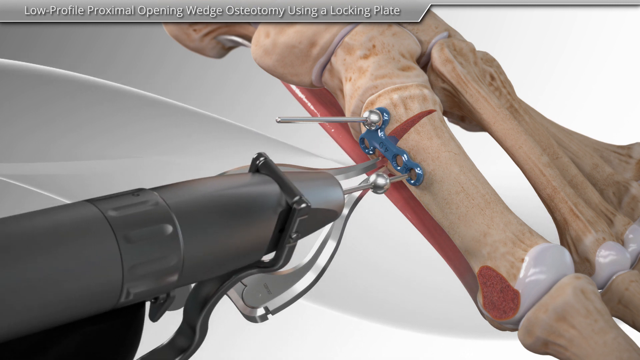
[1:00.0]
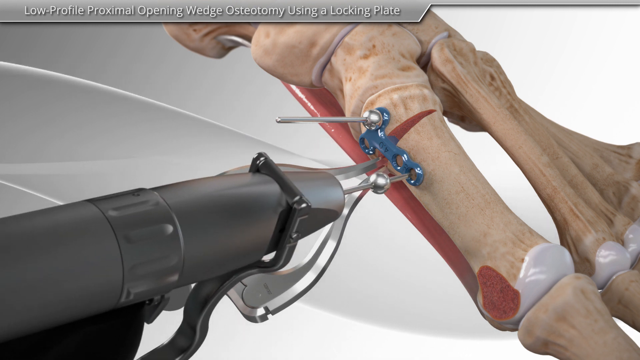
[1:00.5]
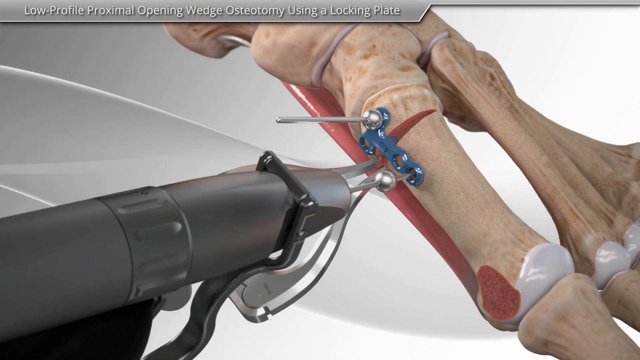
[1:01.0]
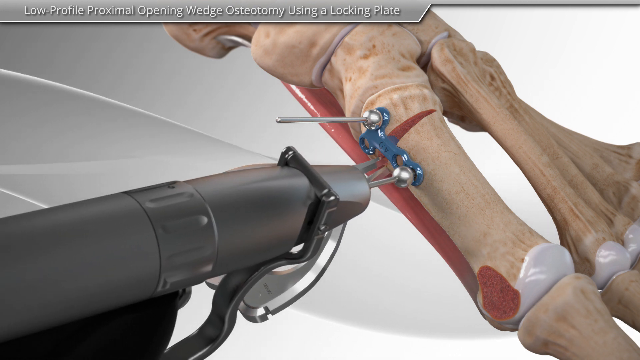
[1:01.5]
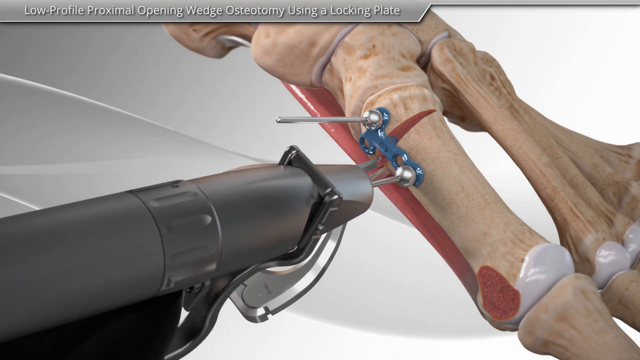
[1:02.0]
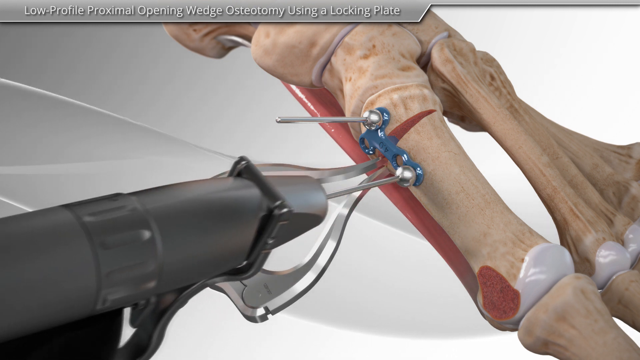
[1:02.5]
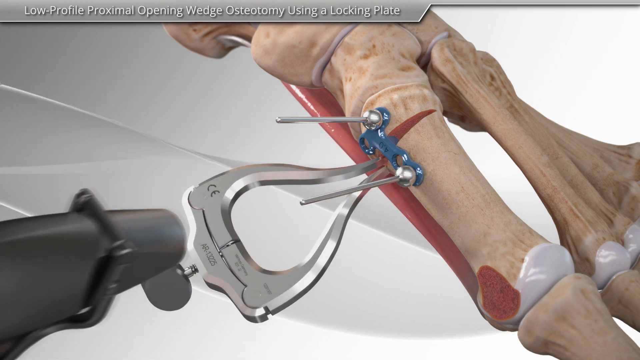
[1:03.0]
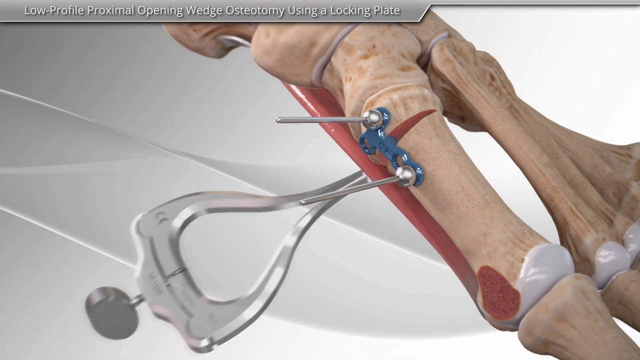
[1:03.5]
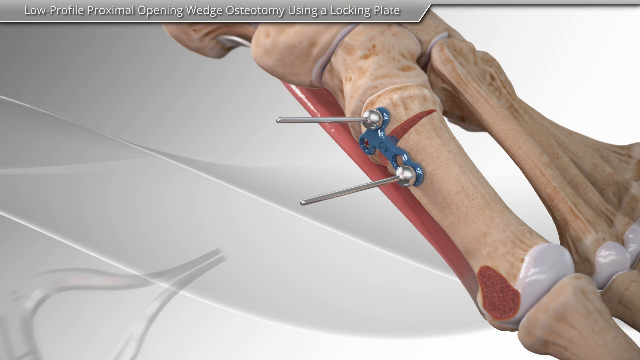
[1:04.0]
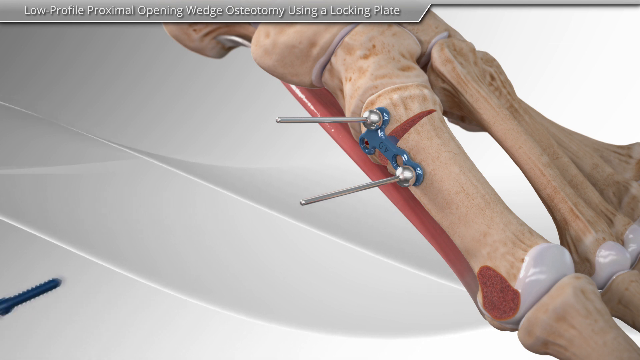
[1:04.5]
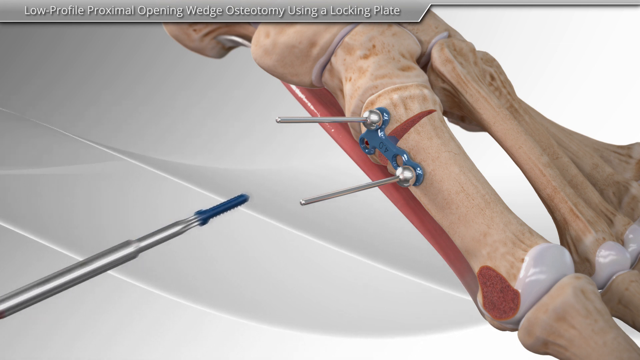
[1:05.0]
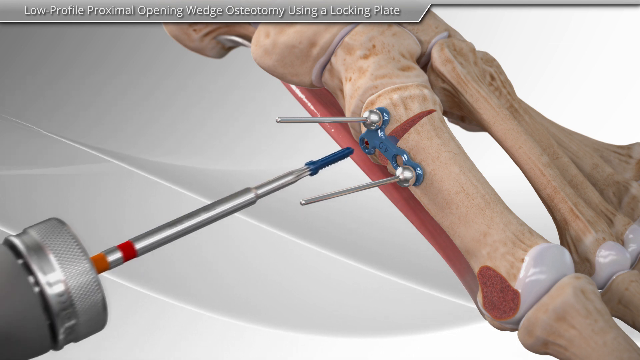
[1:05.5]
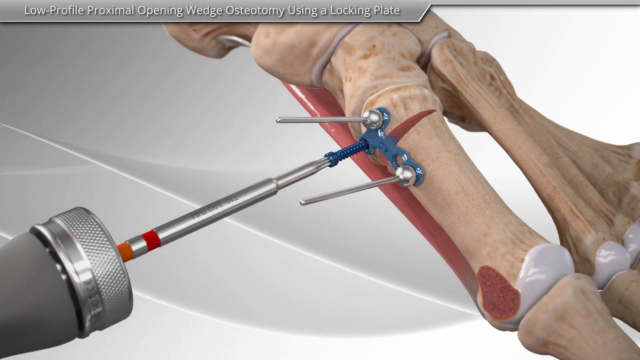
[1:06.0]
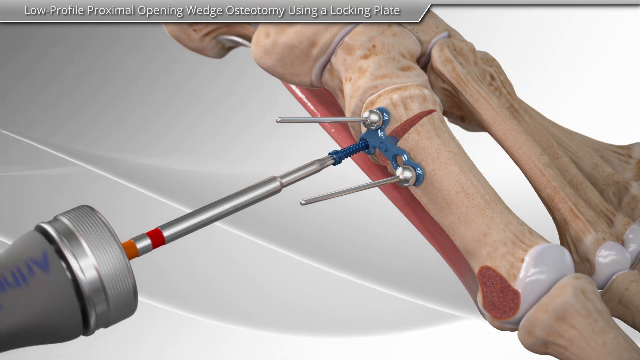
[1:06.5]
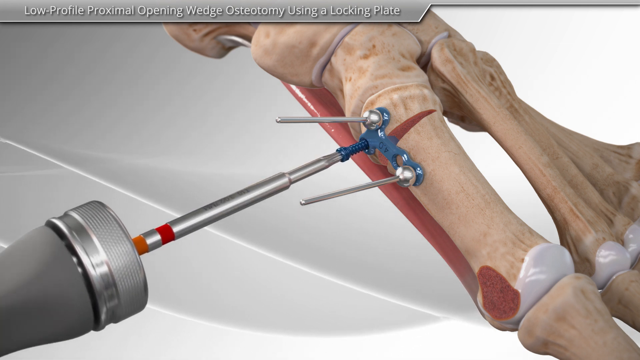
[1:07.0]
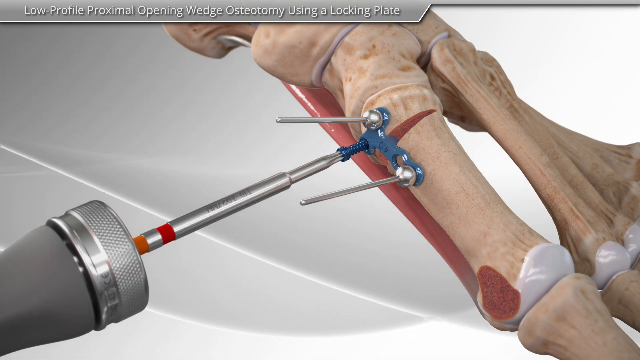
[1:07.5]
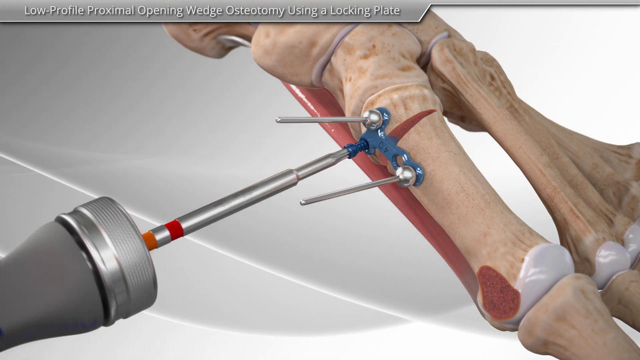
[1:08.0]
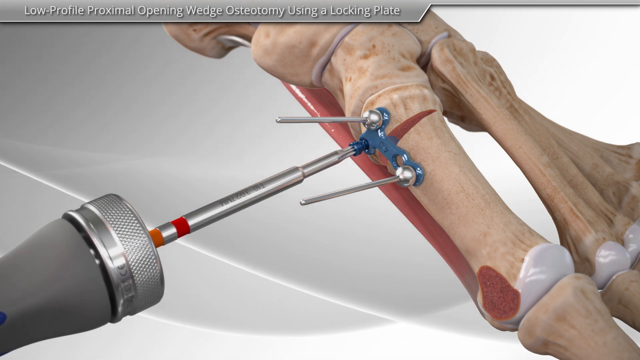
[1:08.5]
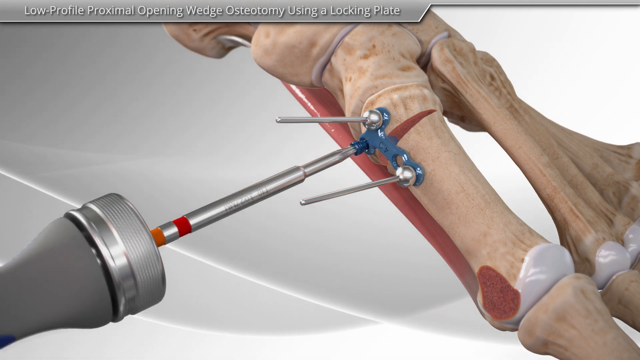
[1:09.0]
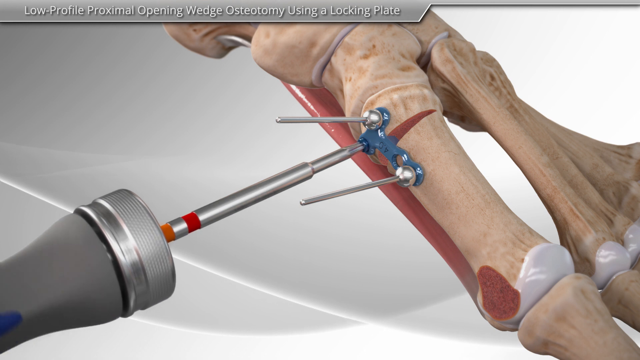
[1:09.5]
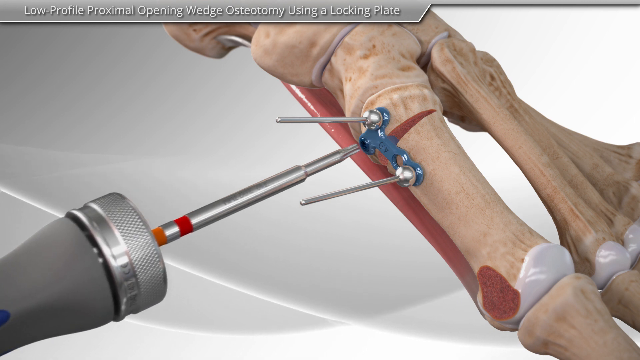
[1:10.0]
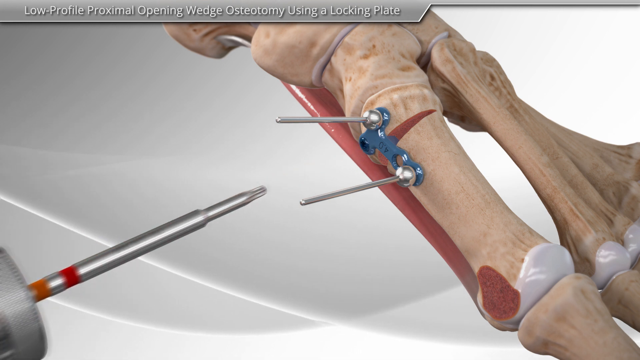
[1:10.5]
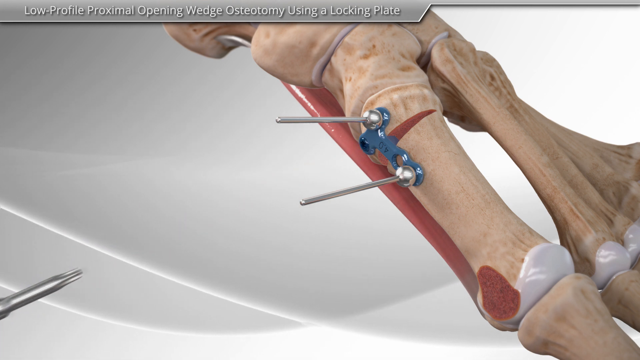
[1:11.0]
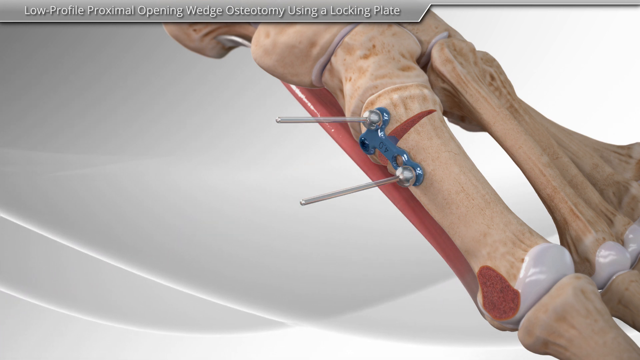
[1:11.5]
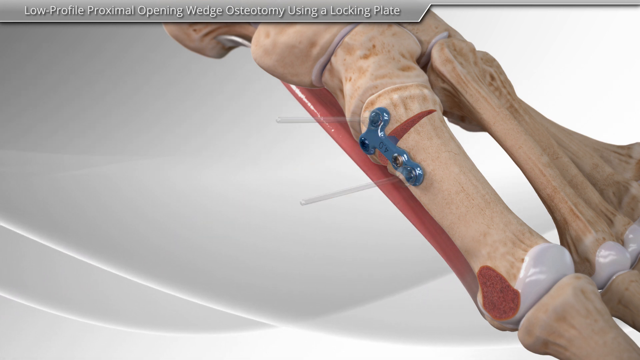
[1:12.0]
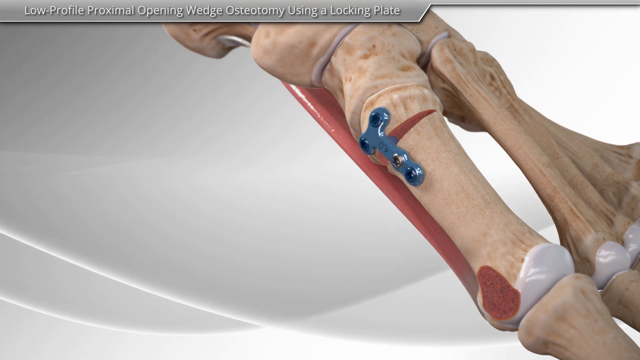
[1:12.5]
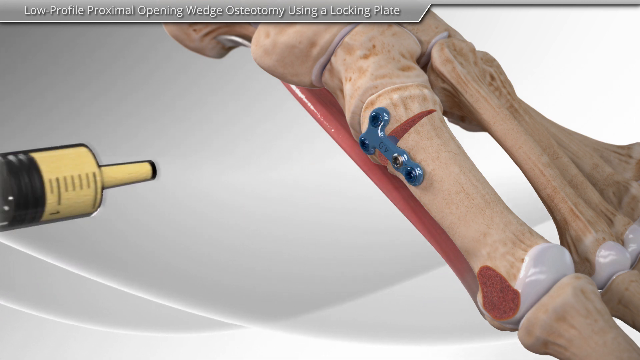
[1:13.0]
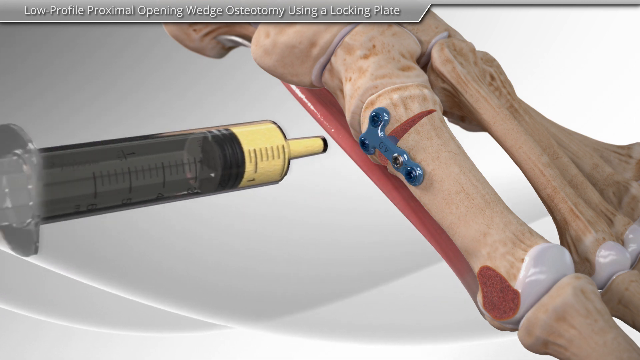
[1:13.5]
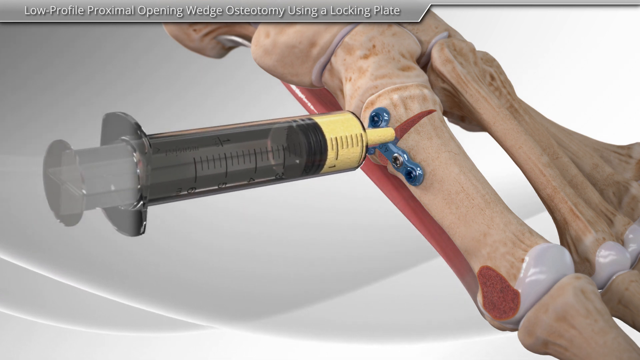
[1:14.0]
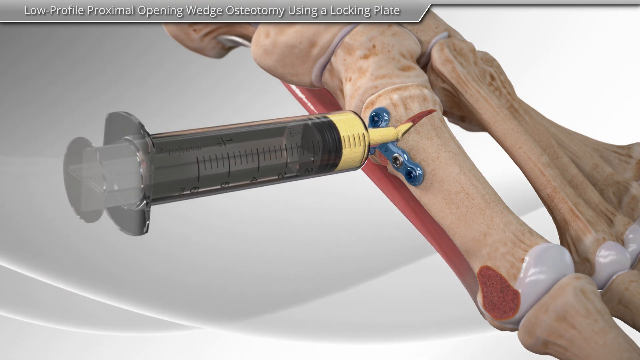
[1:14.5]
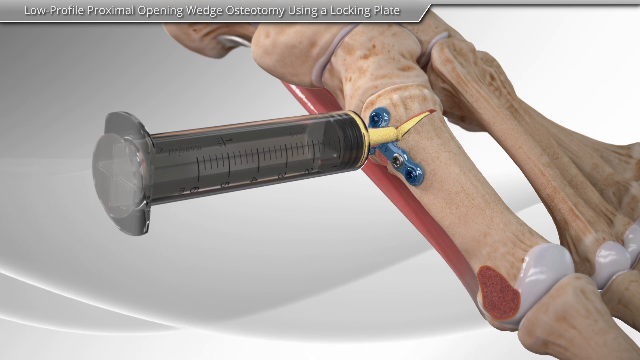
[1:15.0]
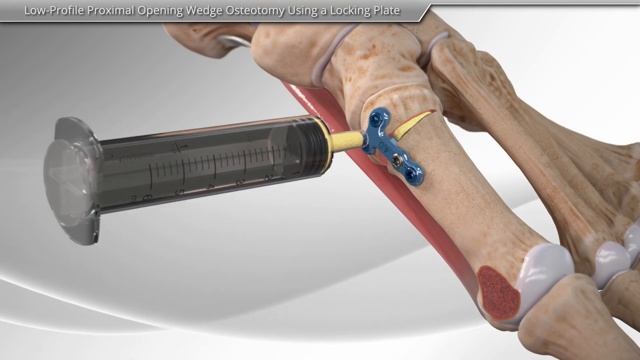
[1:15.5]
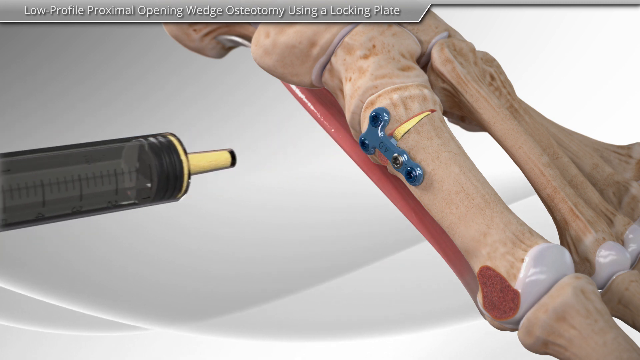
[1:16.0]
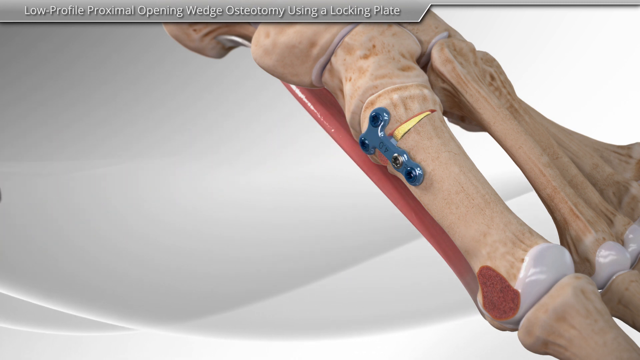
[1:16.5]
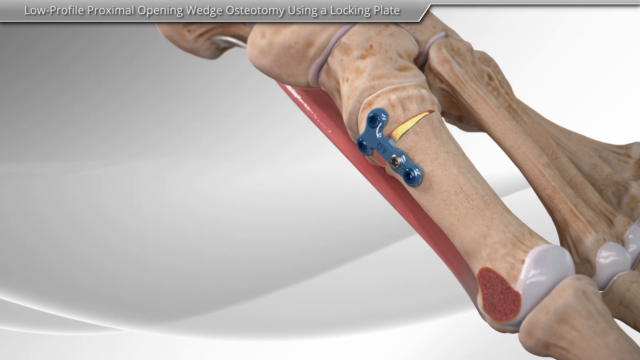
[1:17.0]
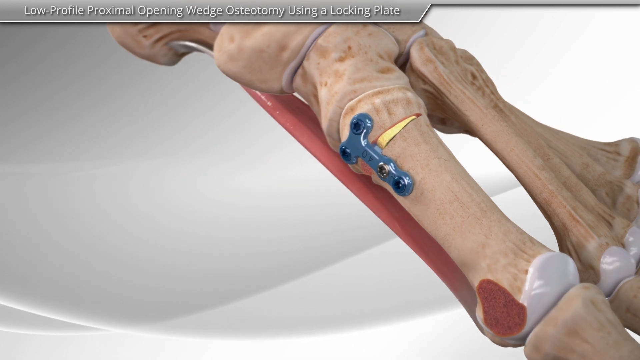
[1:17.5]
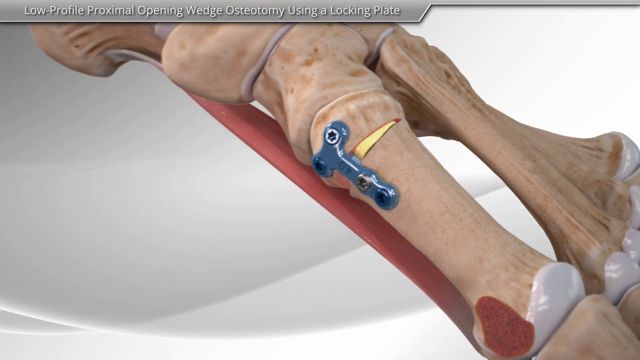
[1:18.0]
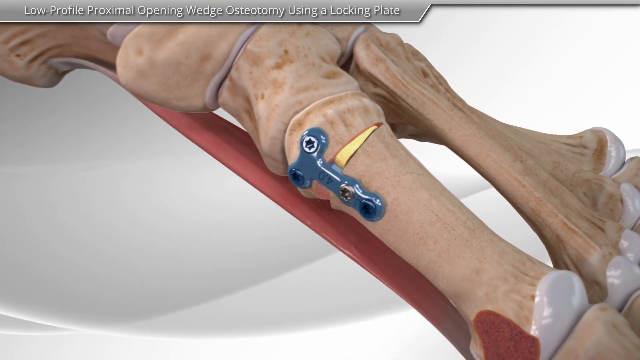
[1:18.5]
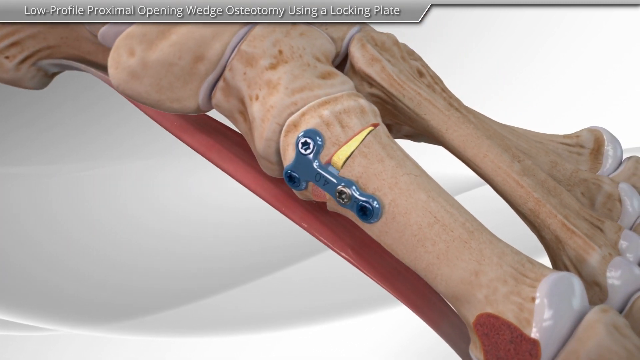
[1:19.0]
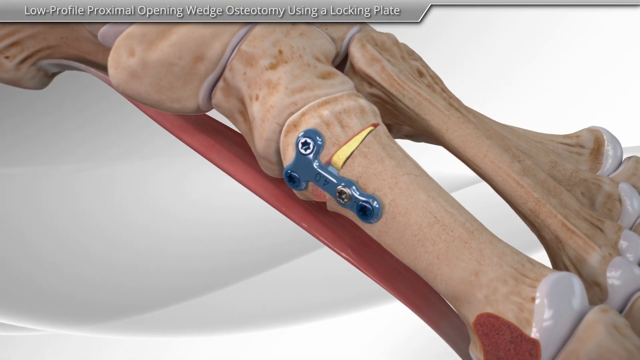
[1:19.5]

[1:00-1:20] A replica of the bones of a foot lies diagonally across the screen from the top middle to the lower right. The toe joint has been moved apart, with a screw placed on either side. In the background, a silver clamp is in the joint, and in front of it is a drill. The drill turns a screw in the screw plate, and then both the drill and the clamp move off toward the lower left-hand corner. A different drill moves in and begins to twist a different screw into the screw plate, pausing occasionally. After the screw is in, this device moves off toward the lower left. A gray syringe filled with a bright yellow liquid moves toward the joint, and the plunger decompresses as the yellow liquid fills the joint. The camera then pans as the foot turns toward the viewer to show a close-up view of the joint.